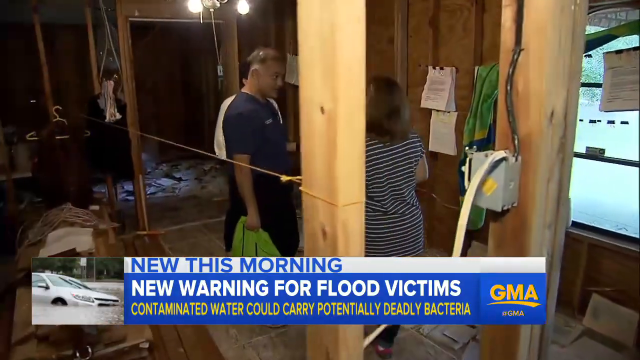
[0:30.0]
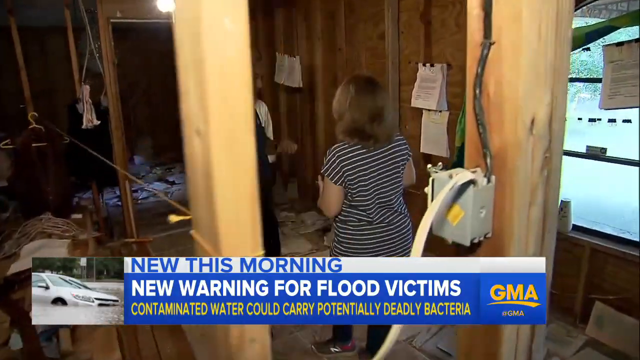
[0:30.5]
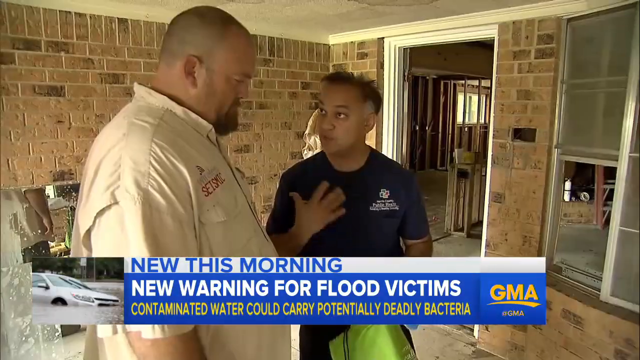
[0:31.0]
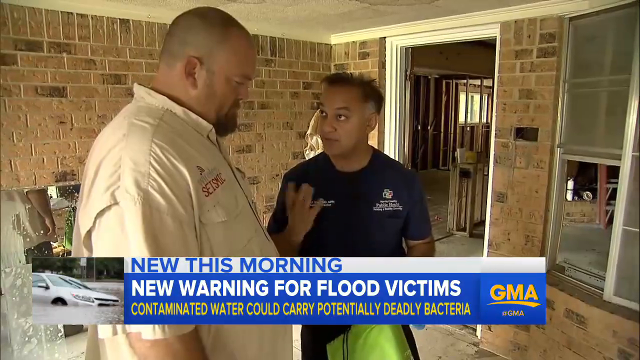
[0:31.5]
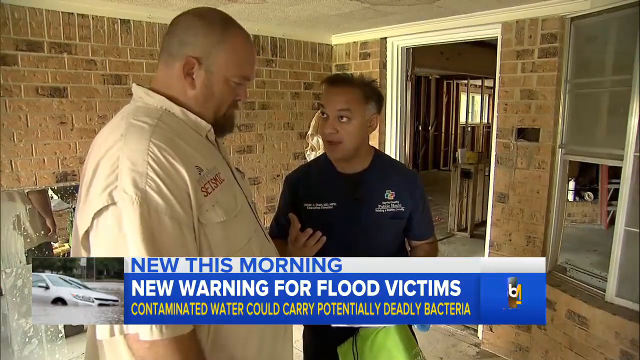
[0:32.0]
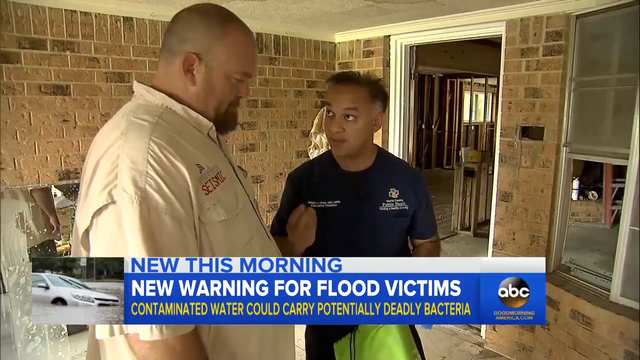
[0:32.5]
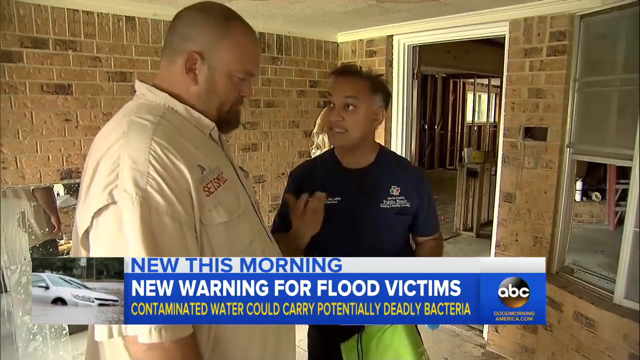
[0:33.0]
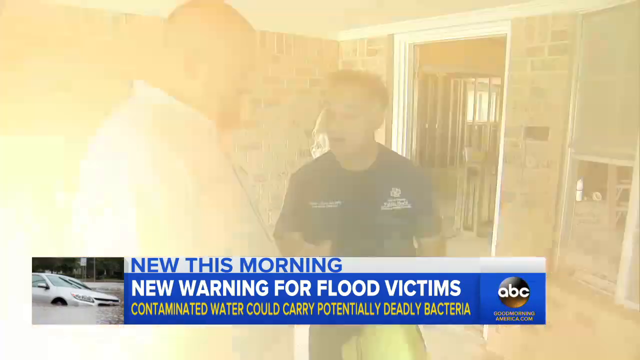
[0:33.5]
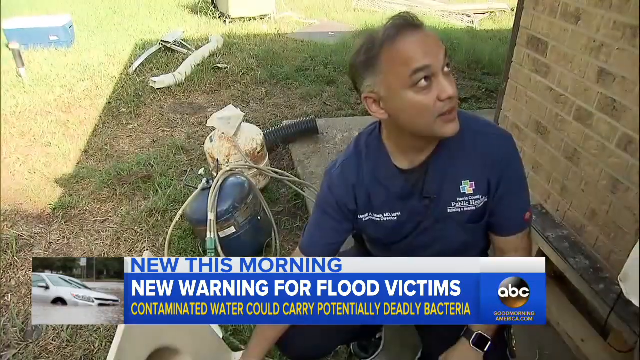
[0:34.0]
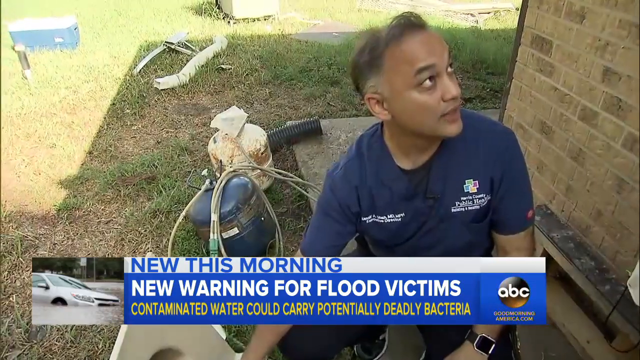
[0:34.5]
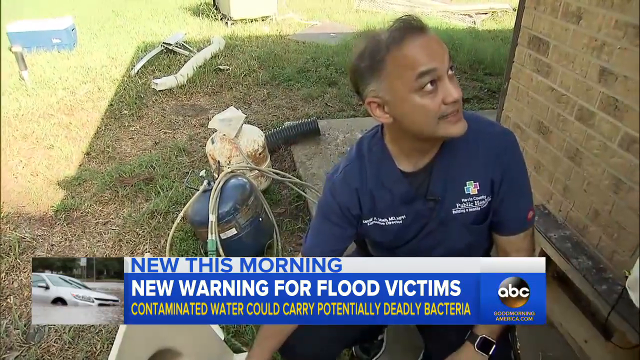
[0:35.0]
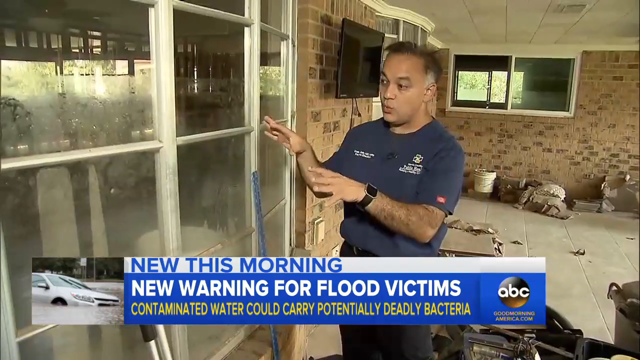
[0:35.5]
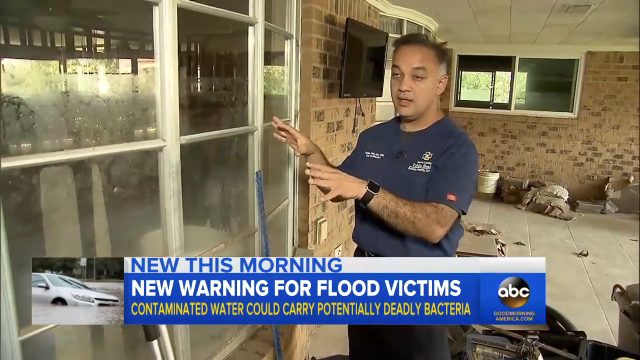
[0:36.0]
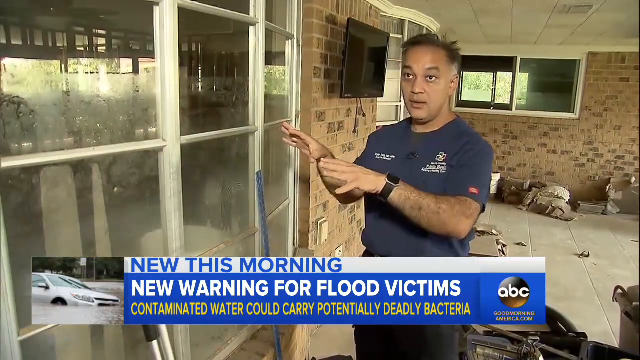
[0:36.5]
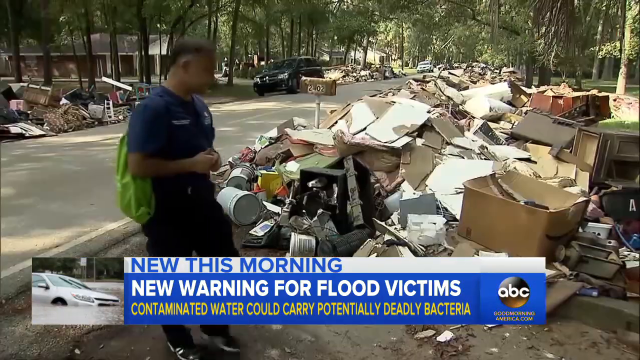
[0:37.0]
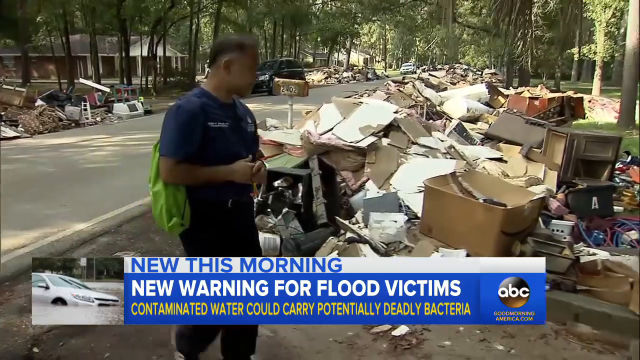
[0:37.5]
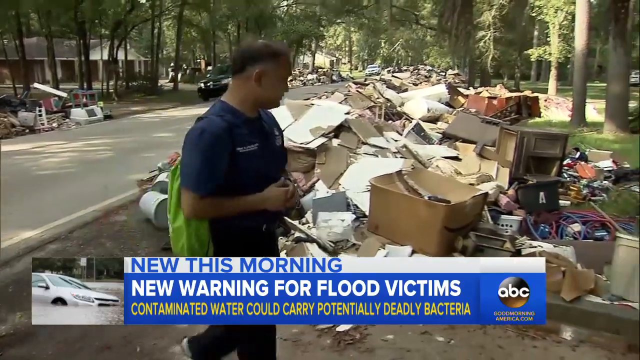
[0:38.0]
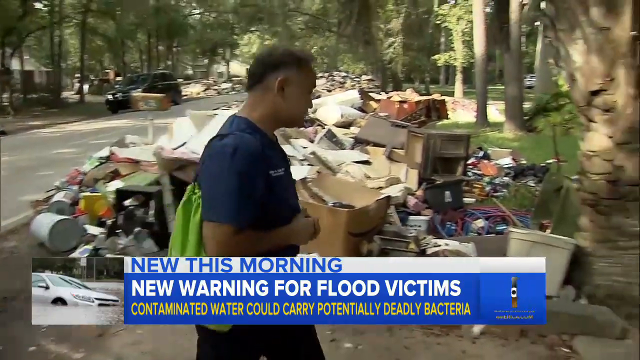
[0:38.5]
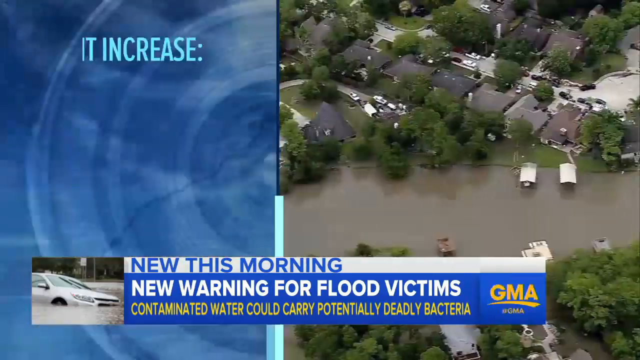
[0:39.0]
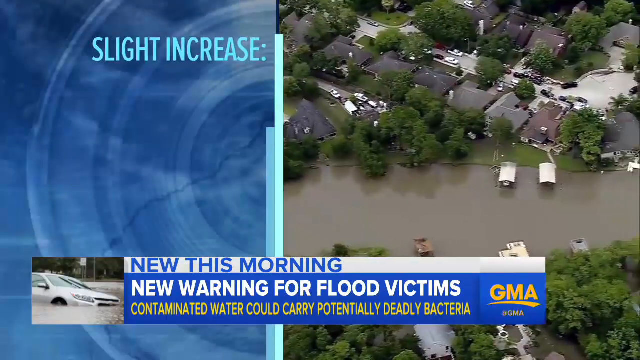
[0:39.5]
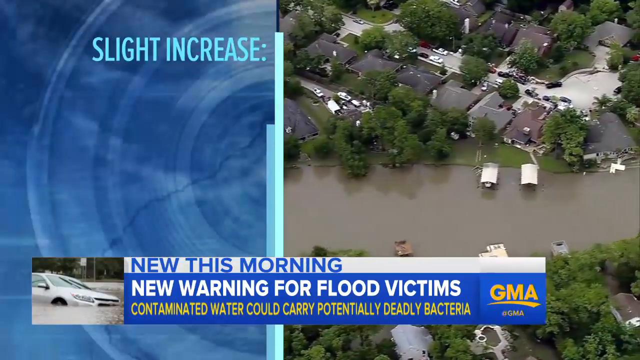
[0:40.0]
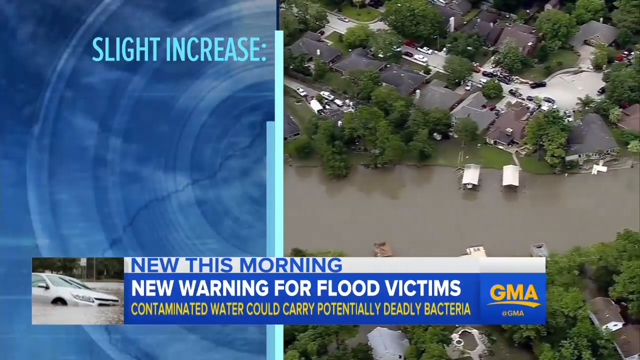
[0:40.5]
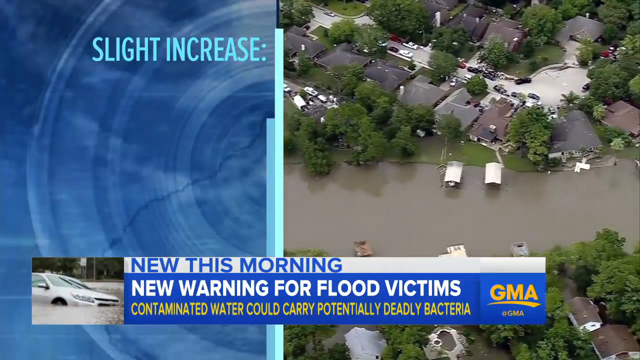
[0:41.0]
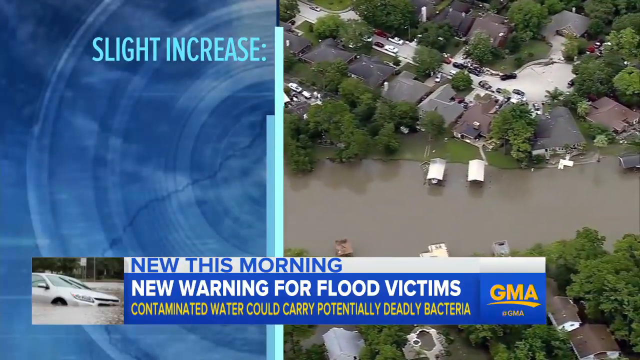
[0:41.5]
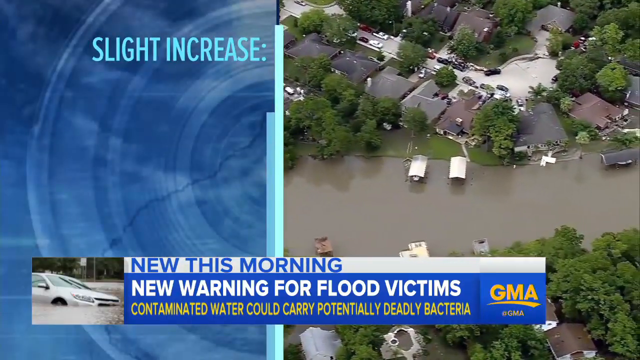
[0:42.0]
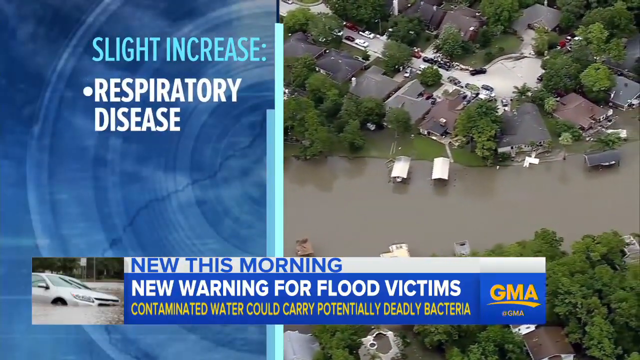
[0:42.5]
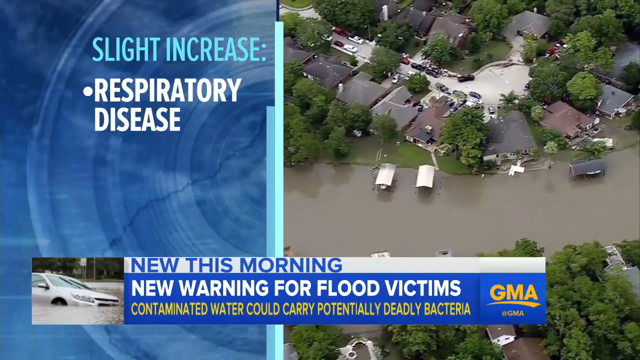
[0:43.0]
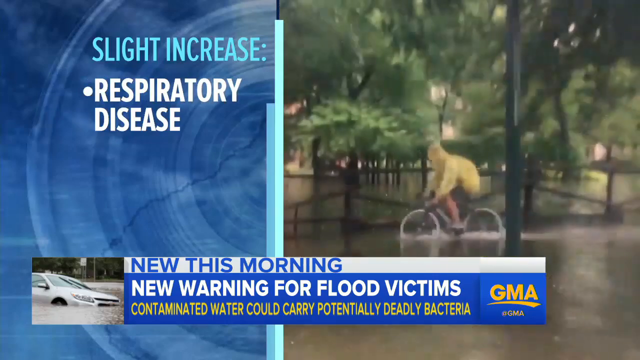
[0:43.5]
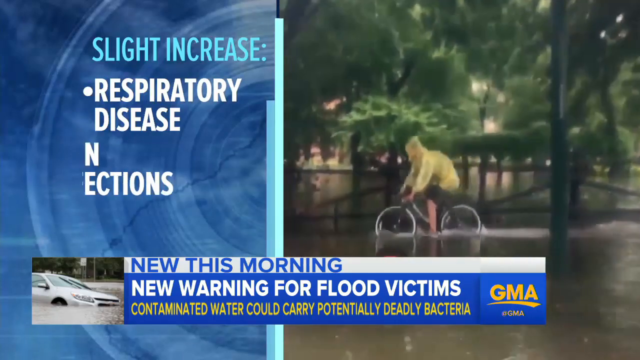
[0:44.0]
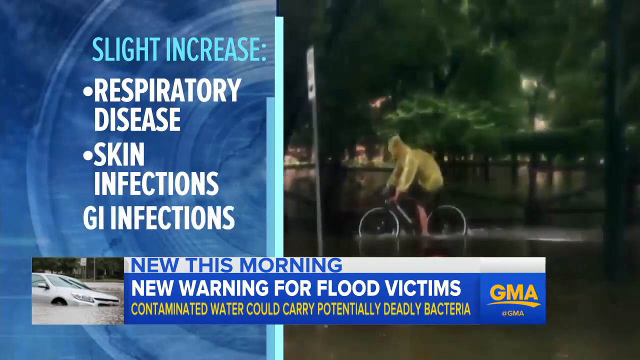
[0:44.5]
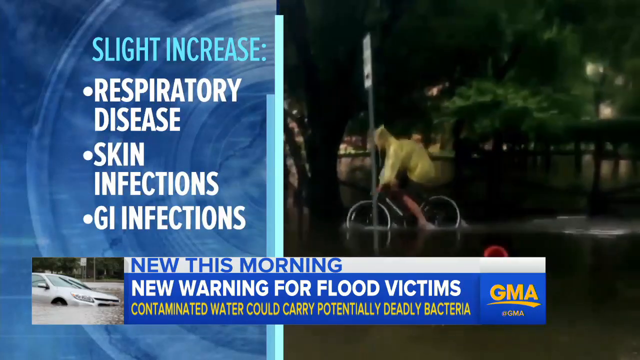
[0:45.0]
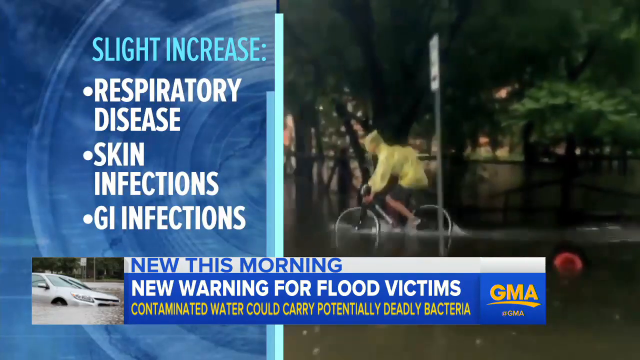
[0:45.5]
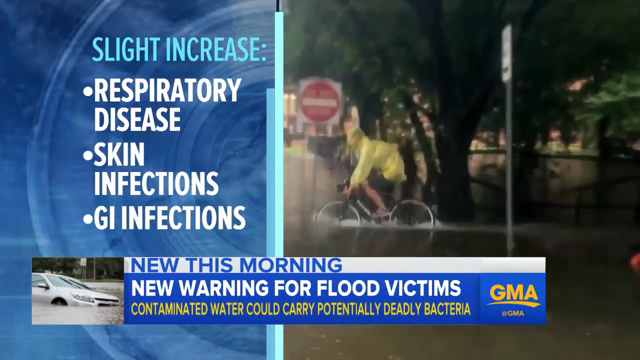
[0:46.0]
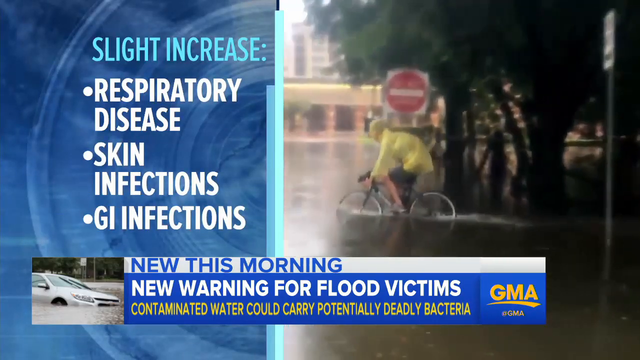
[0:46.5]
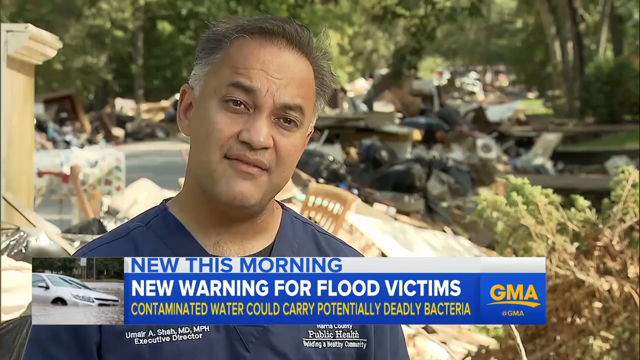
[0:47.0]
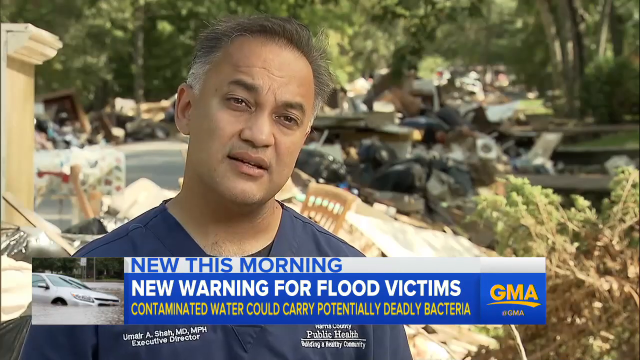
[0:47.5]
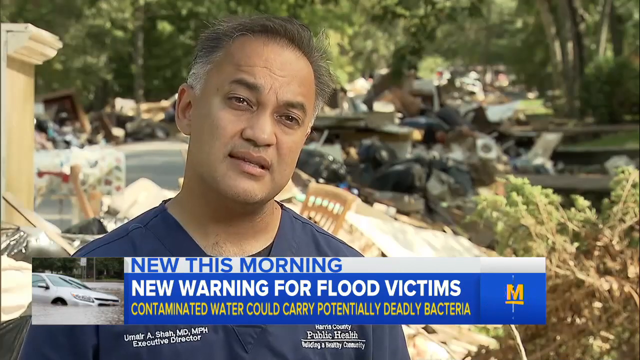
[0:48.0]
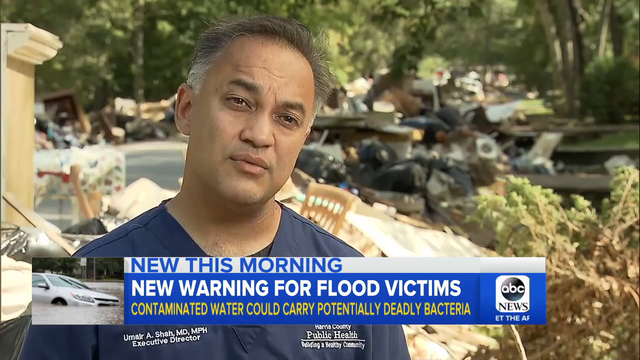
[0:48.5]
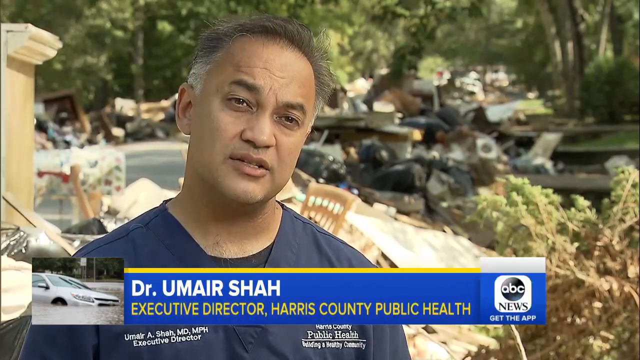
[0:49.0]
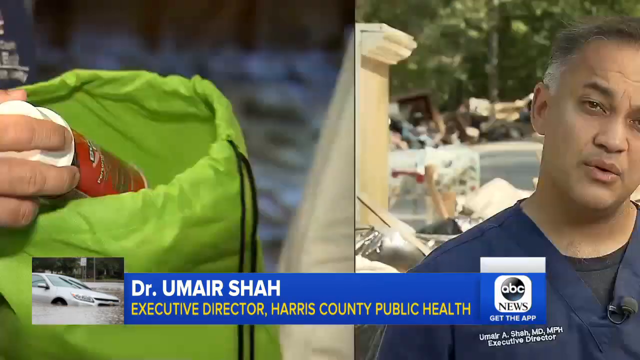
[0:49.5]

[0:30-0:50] In this Good Morning America news report, a text bar at the bottom of the screen reads, "New this morning. New warning for flood victims. Contaminated water could carry potentially deadly bacteria." Scenes of flooding in a residential area appear throughout. In one scene, a man wearing a blue shirt with some sort of logo on it talks to people around a house that has been gutted down to the frames, presumably in a flood. He is outside with equipment and then gestures to the house at different locations around the exterior and interior. He walks toward the house past a huge pile of debris that goes completely down a city street. Next, an aerial view of a flooded residential area appears on the right side of the screen, and on the left side a graphic has text reading, "Slight increase, respiratory disease, skin infections, GI infections." The man who was walking around earlier is then interviewed; he looks directly at the camera and speaks to someone, with a huge pile of debris behind him. A text bar at the bottom of the screen identifies him as "Dr. Umair Shah, Executive Director, Harris County Public Health."